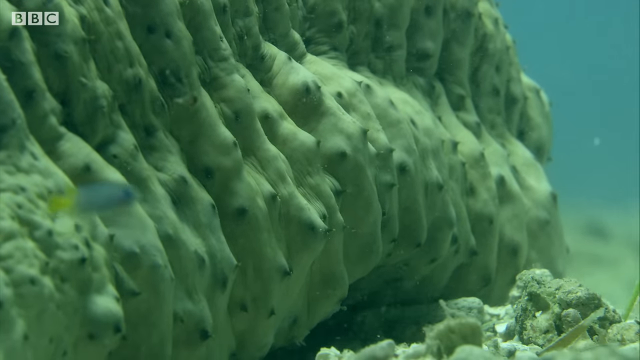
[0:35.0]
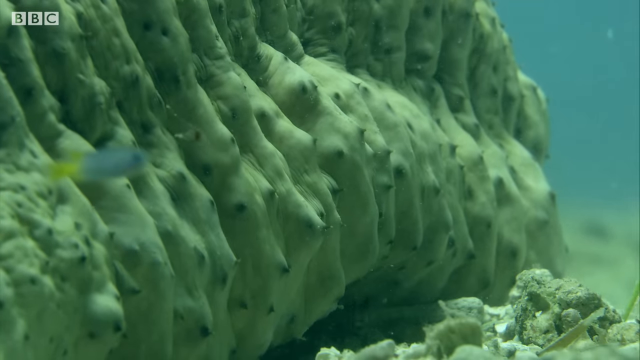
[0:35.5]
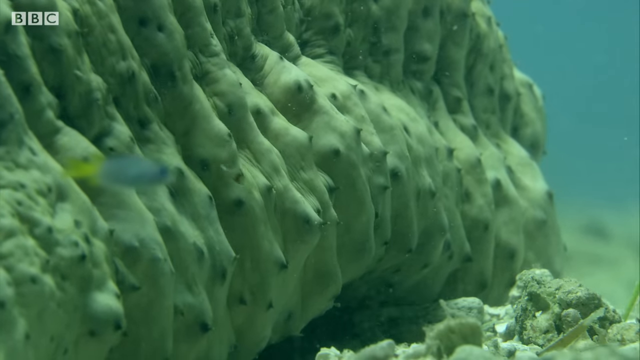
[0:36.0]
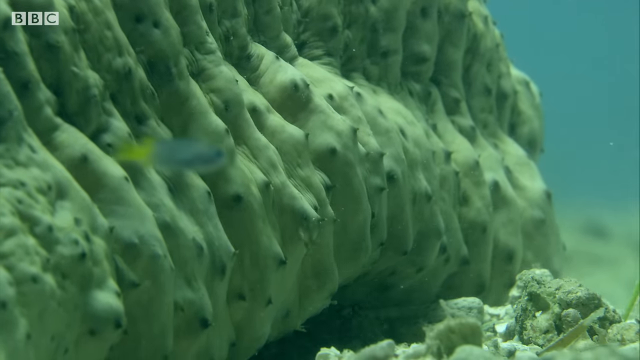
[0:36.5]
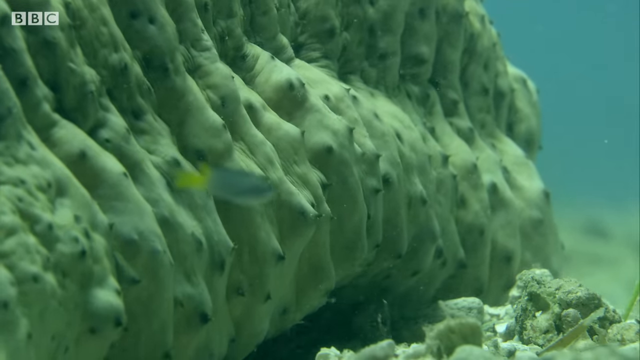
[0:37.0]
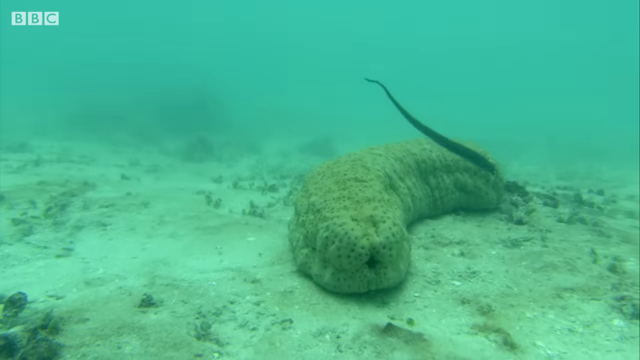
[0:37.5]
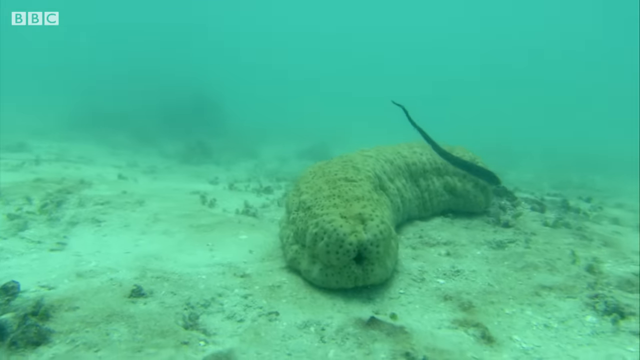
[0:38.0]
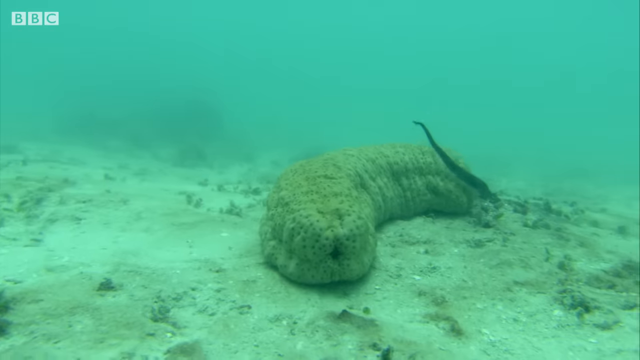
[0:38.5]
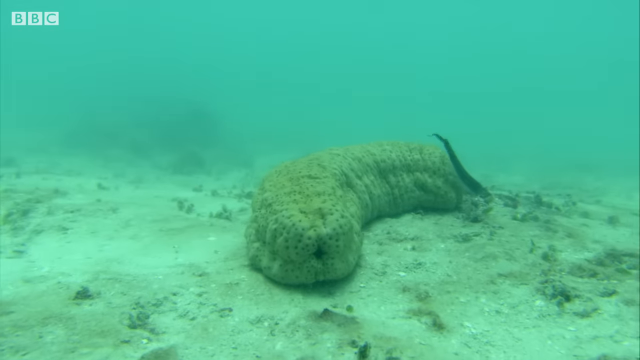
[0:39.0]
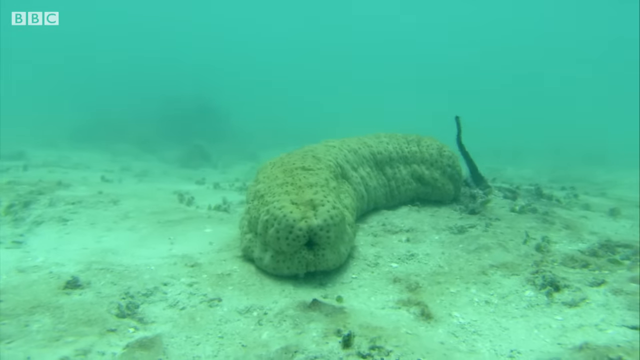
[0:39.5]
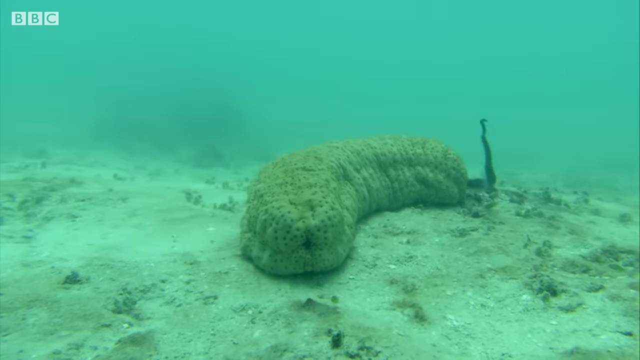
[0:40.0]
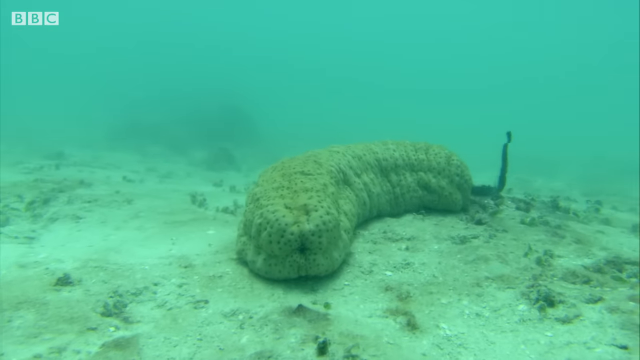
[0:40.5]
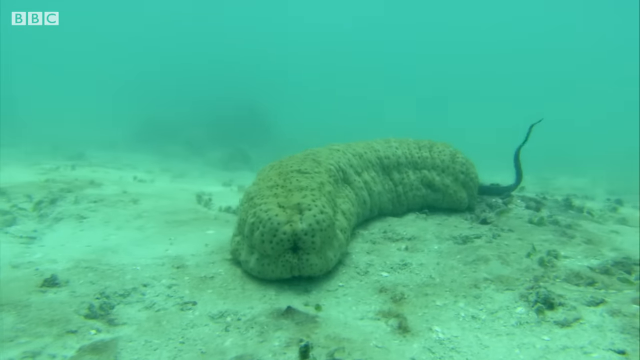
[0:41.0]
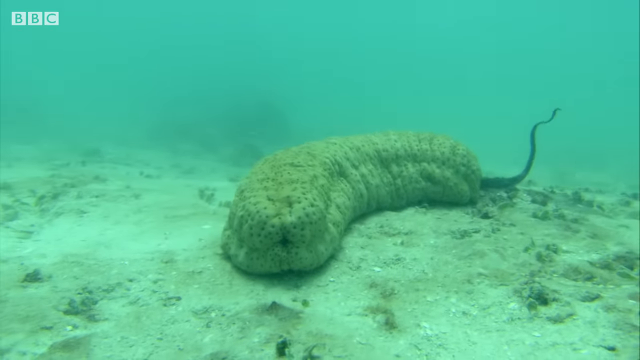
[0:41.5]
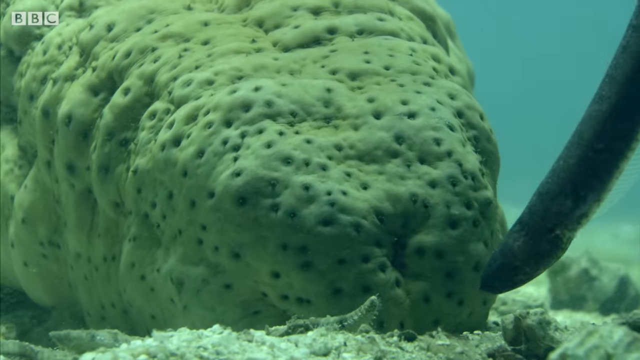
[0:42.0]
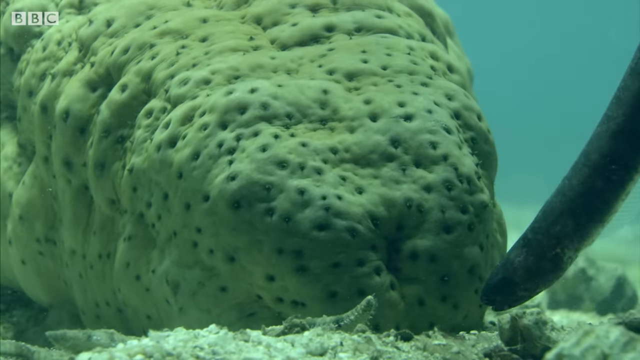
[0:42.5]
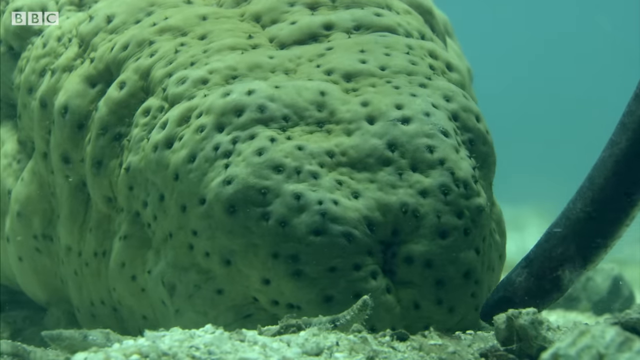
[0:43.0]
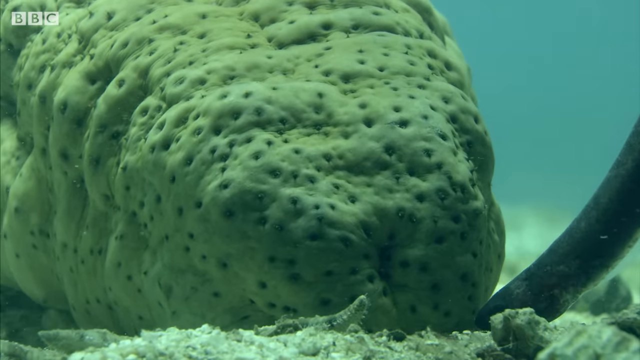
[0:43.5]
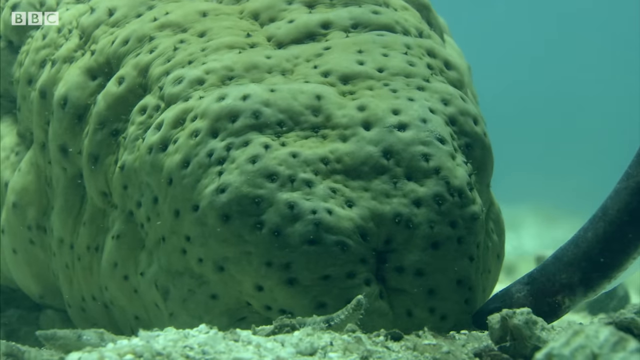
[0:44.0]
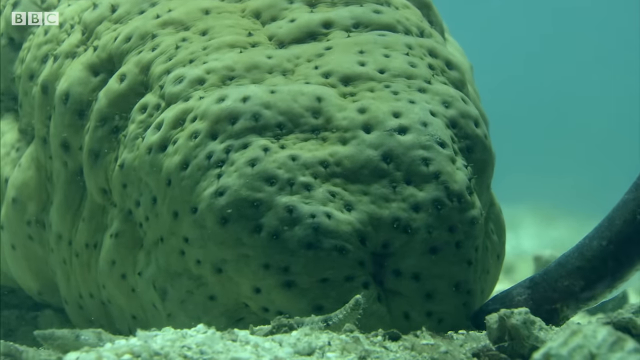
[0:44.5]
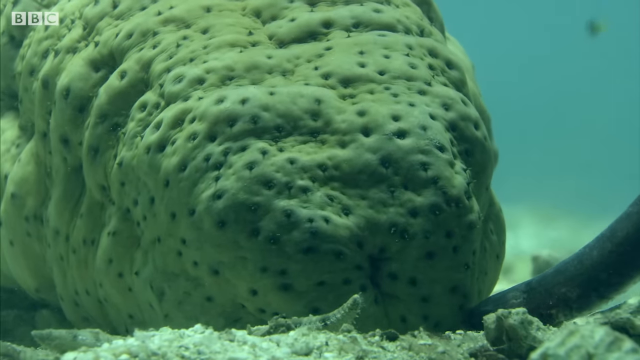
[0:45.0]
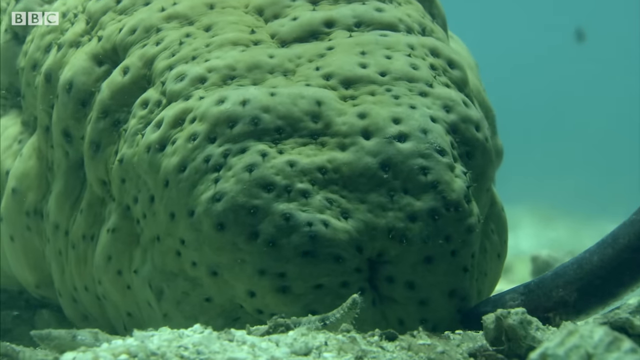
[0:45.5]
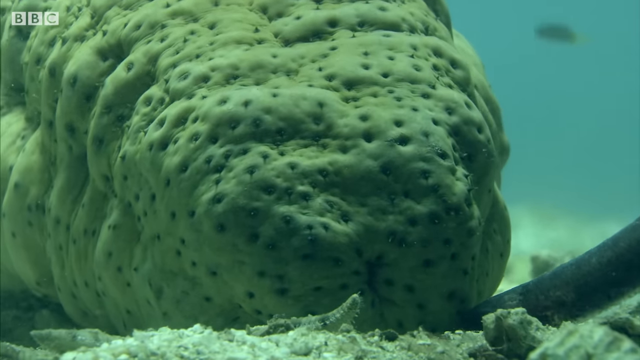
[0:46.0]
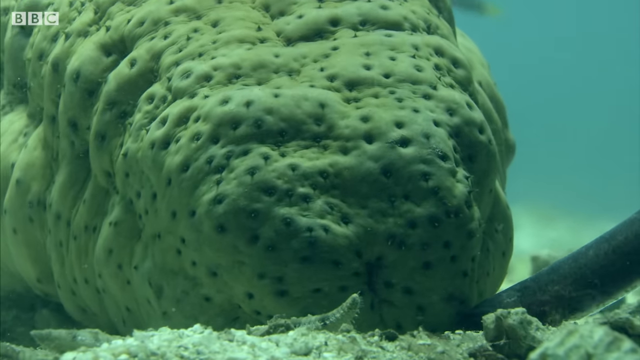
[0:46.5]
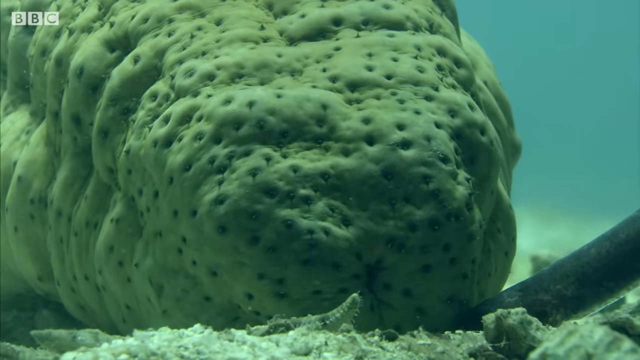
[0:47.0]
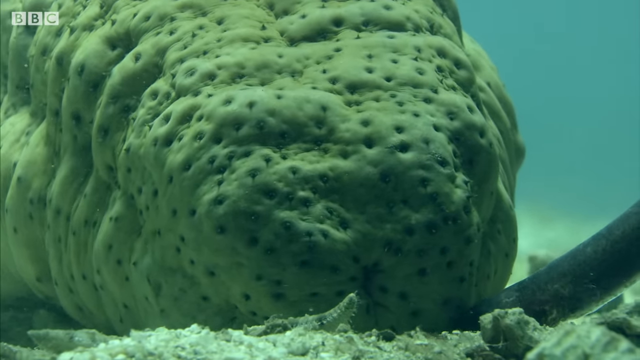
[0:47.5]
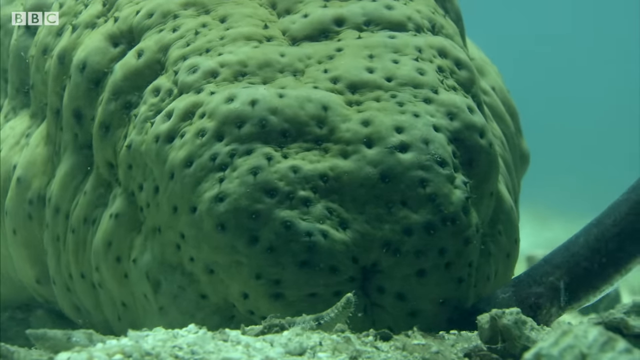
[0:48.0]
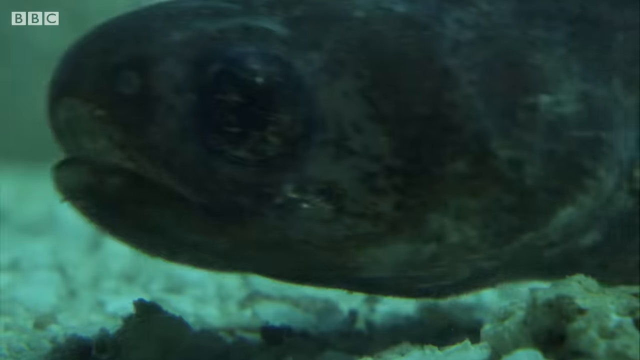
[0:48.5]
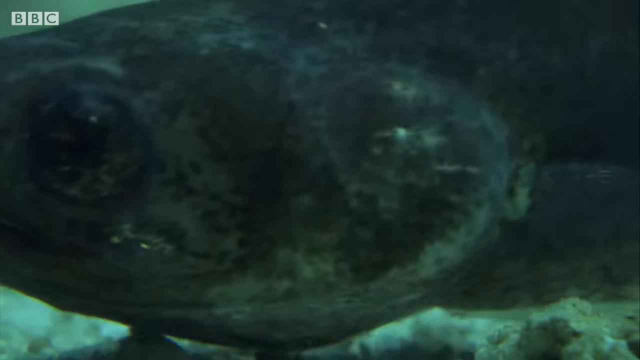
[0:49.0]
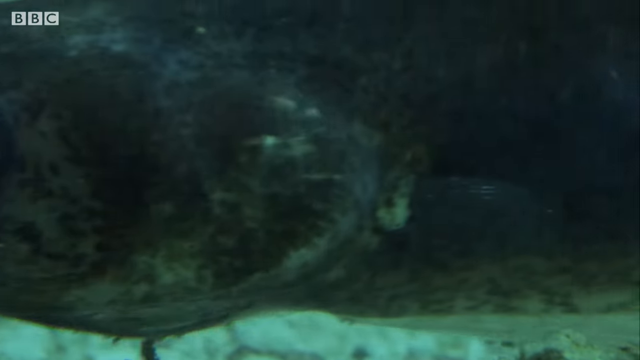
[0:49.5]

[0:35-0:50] The parafish, the eel, comes upon the animal and appears to be trying to go under it, seemingly hiding underneath it for safety. The blue and yellow fish is still around. The setting is the same murky water, with both on the bottom, which looks sandy-ish. No other sea life is visible in the background, just the blob the eel is going under and the blue and yellow fish.